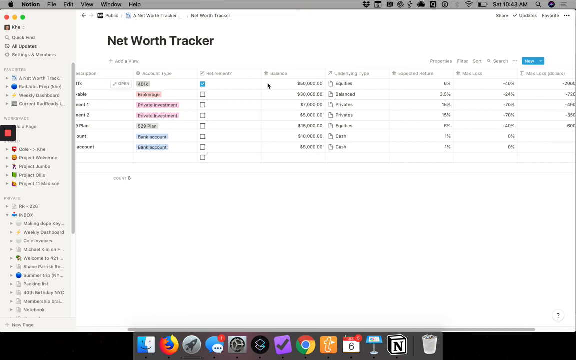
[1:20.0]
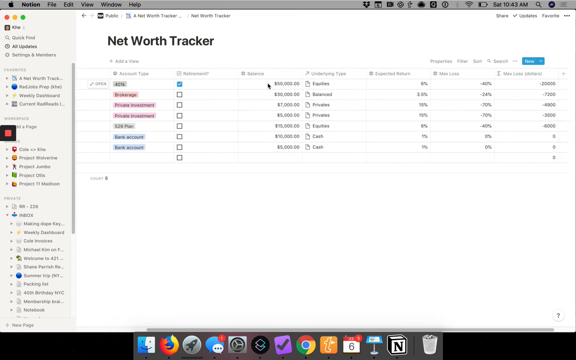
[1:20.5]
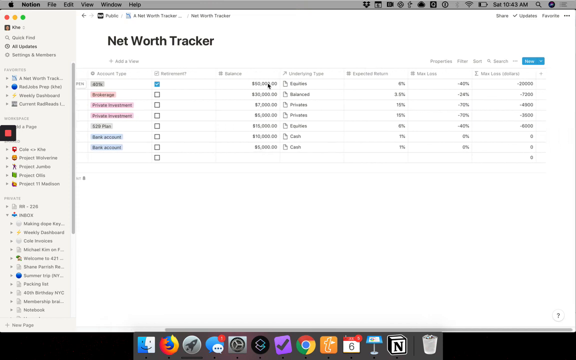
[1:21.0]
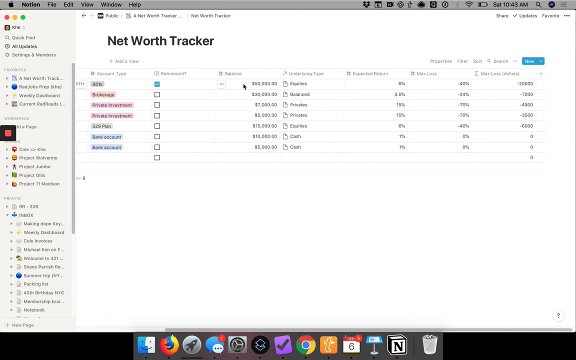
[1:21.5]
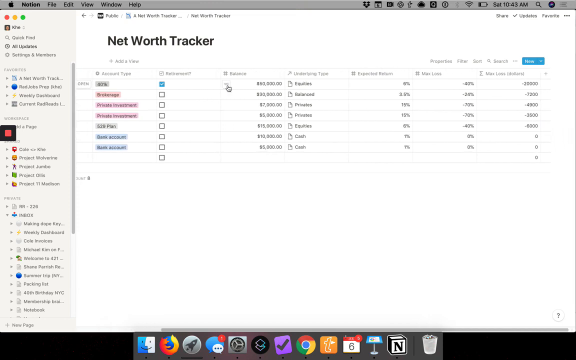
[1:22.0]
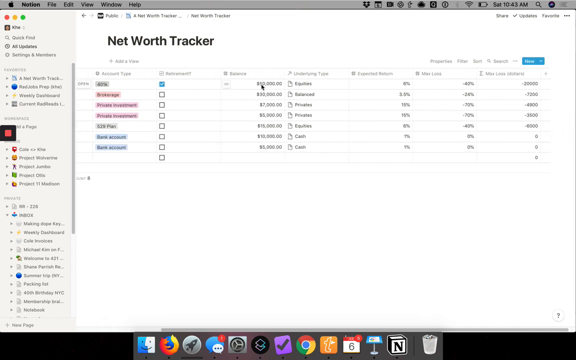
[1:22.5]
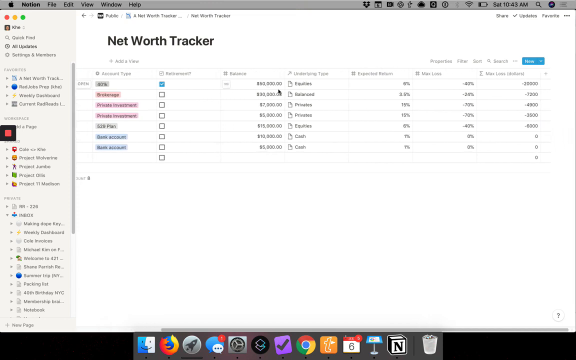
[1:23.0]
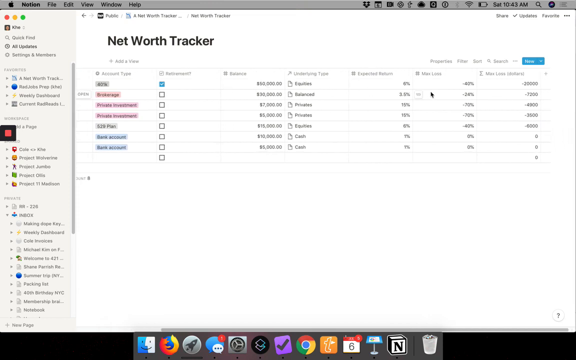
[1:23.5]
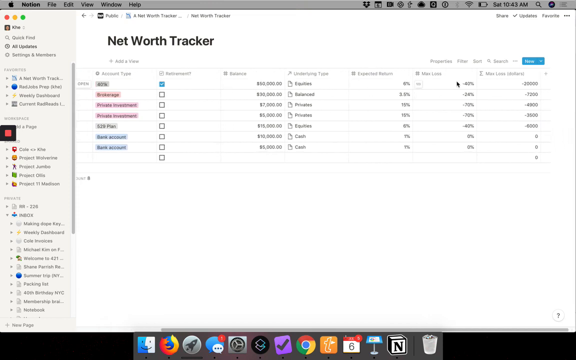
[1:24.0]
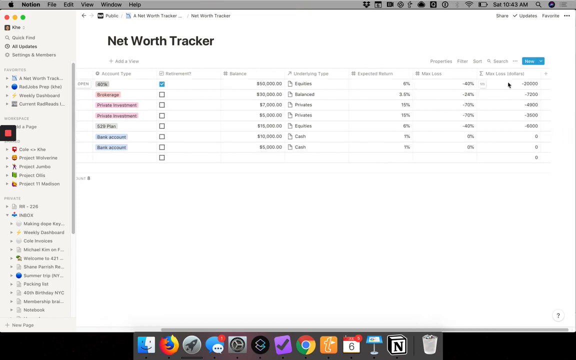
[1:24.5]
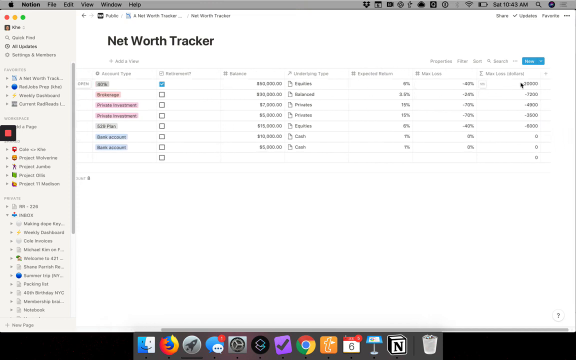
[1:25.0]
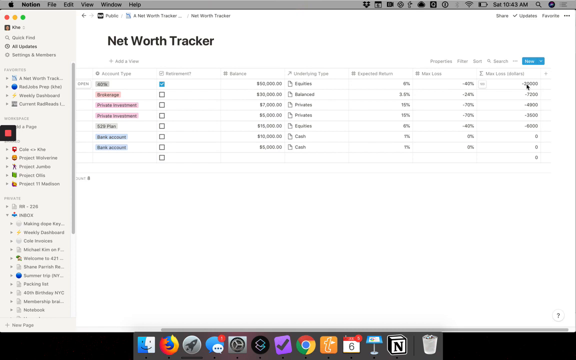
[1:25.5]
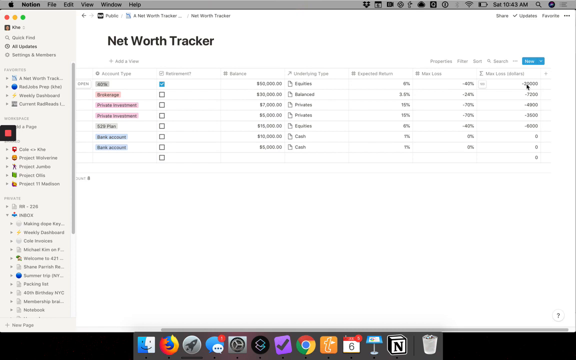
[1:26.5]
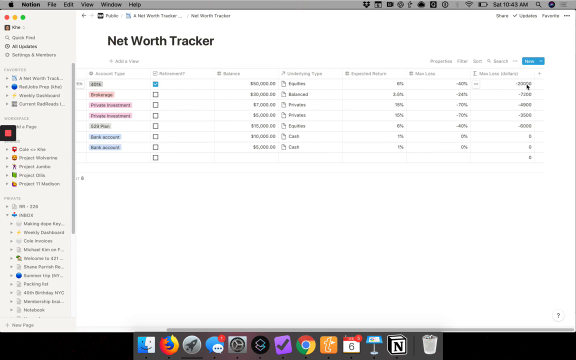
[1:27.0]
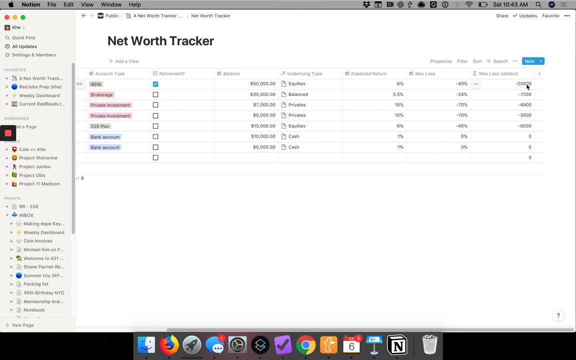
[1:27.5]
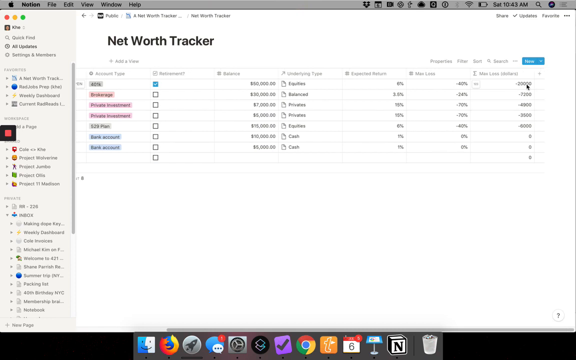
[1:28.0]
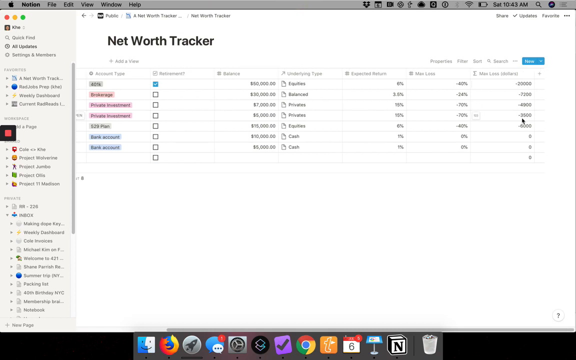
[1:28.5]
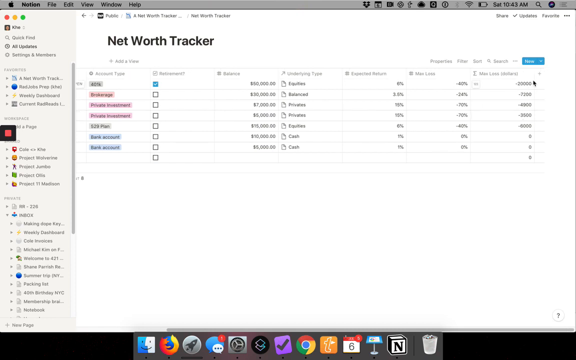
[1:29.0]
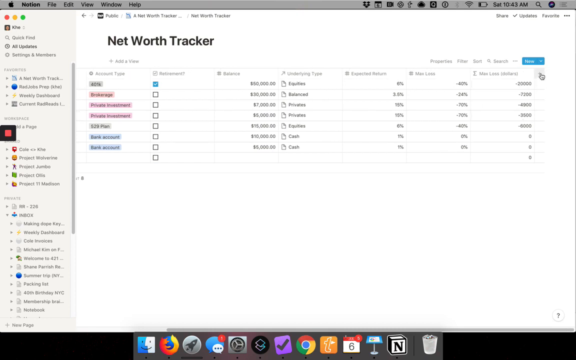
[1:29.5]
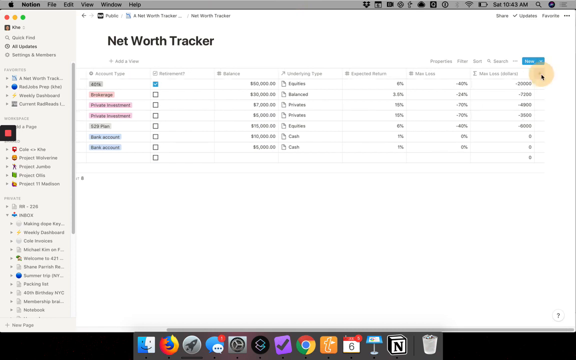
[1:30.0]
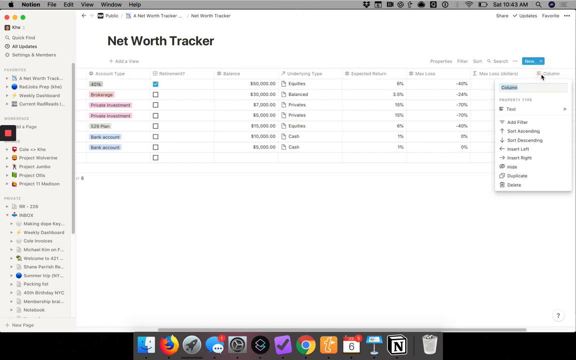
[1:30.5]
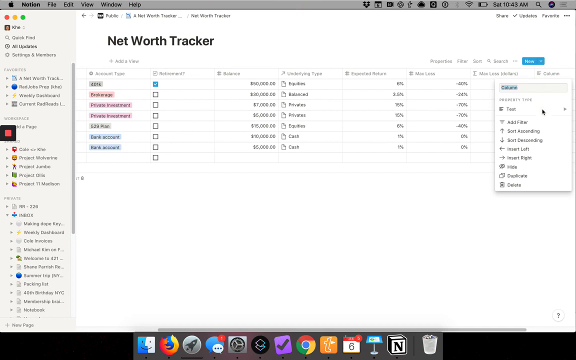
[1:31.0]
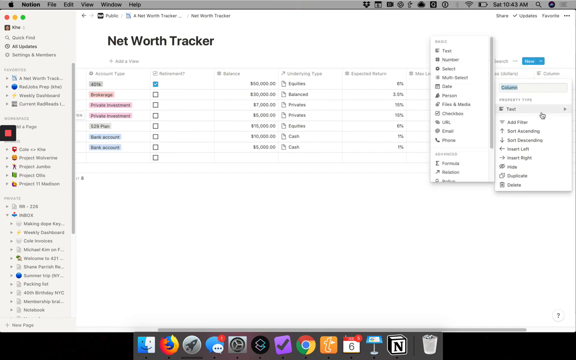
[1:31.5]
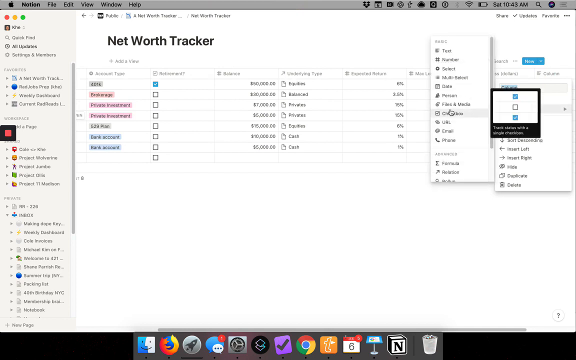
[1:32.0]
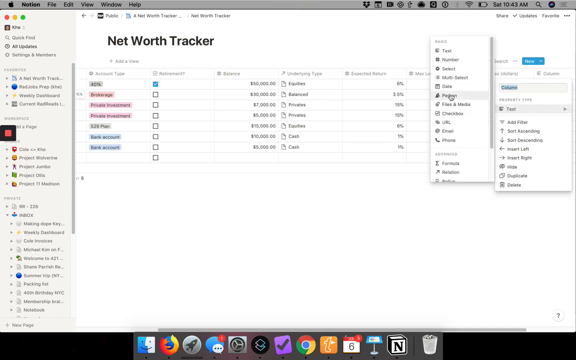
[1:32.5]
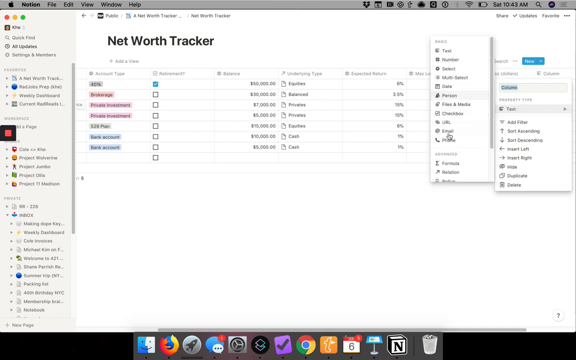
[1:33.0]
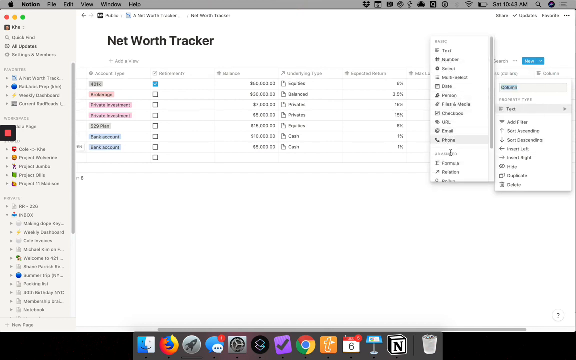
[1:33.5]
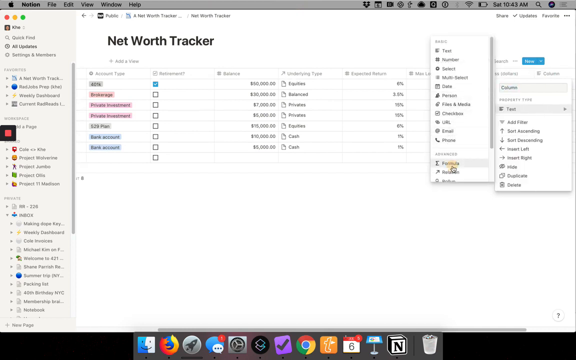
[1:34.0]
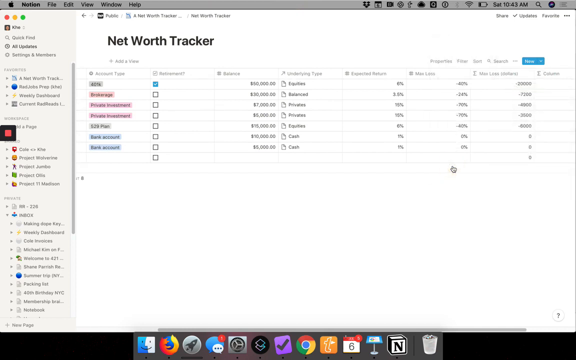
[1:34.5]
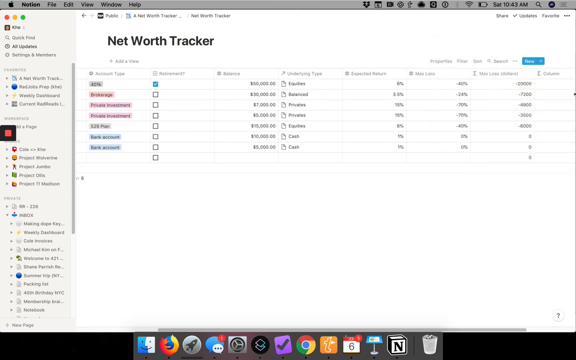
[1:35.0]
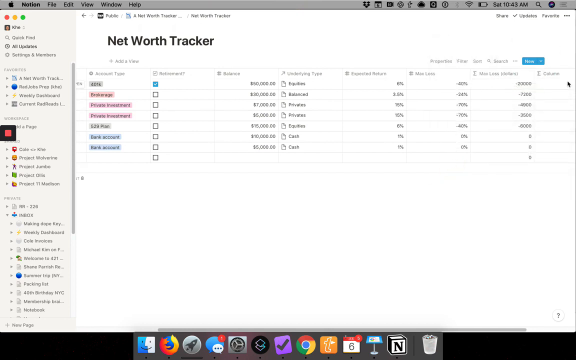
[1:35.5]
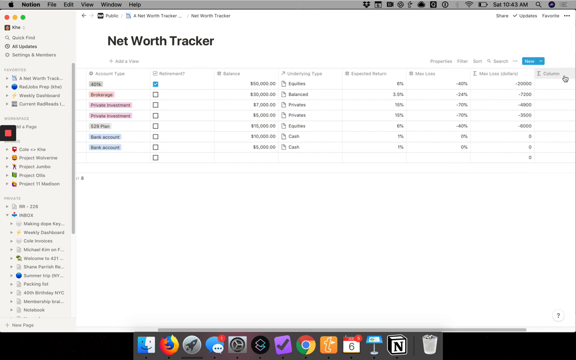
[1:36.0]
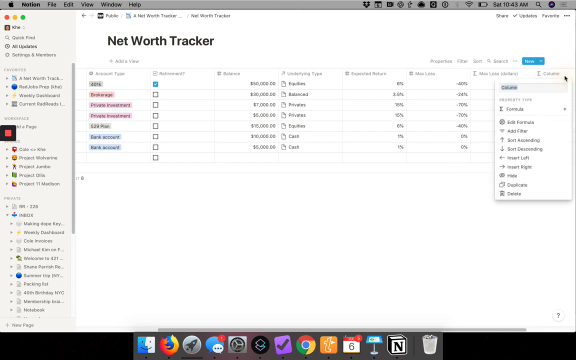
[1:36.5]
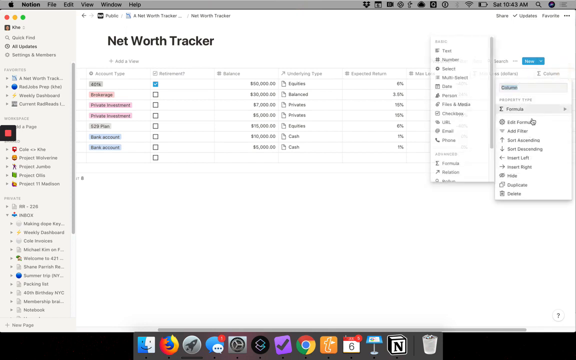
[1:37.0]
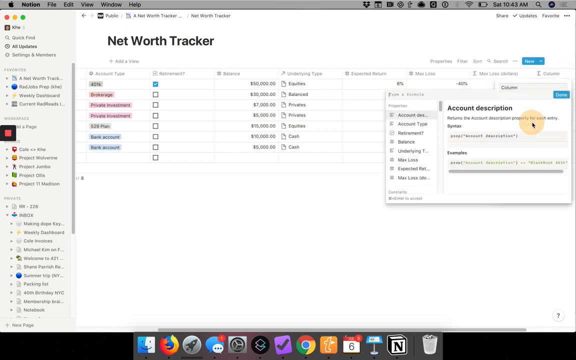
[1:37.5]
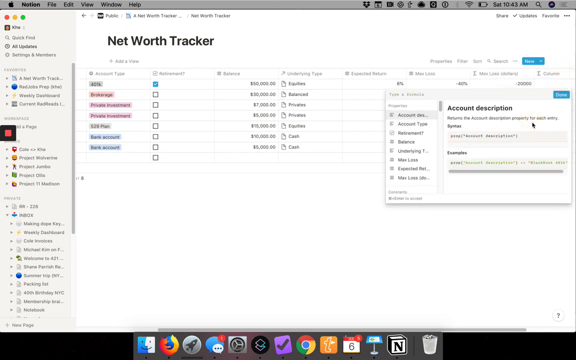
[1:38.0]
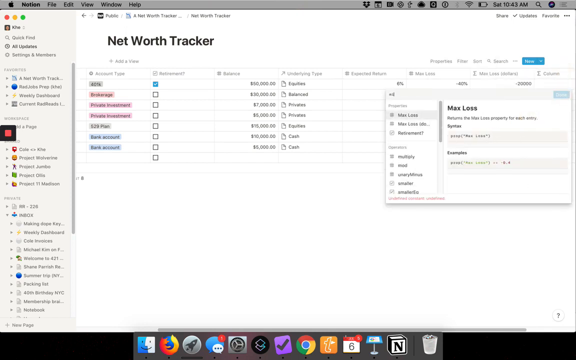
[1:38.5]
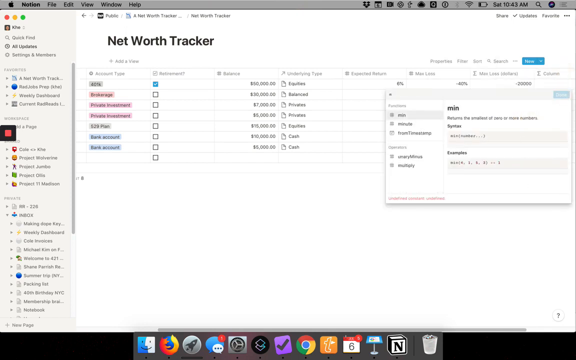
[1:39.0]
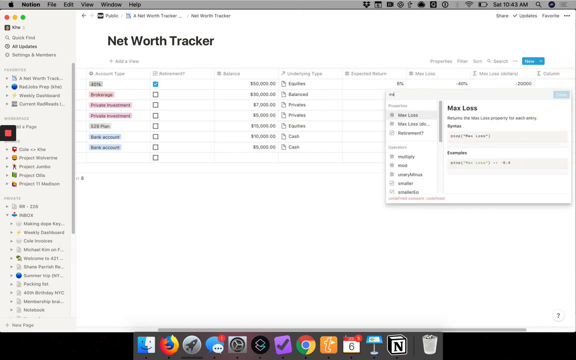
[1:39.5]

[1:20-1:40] The video shows someone's Apple computer, with an Apple logo in the upper left corner. The page is mostly a white backdrop reading "Net Worth Tracker," with several columns of writing side by side, some checkmark boxes, and some highlighted words. A black mouse pointer moves on the screen and starts clicking. It goes to the far right side of the page, moves up and then down, and clicks on a dropdown, which opens a whole new mini box on the screen. In a text box, the user hits the word "text" and then scrolls and hits other words; a yellow circle pops up with every click. When they find what they want, it returns to the main page, where they continue clicking and then scroll, using a scroll bar to the left while the page moves to the right.